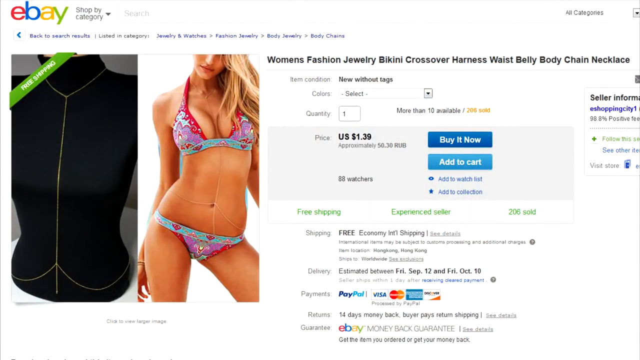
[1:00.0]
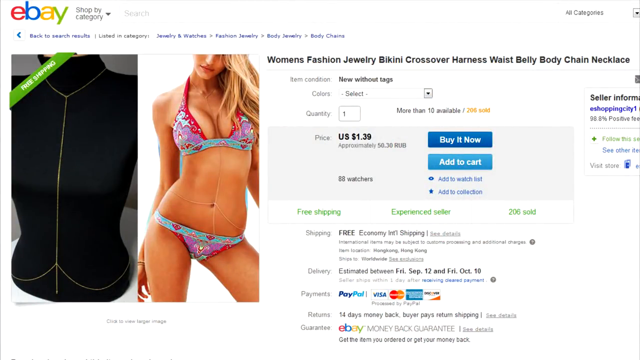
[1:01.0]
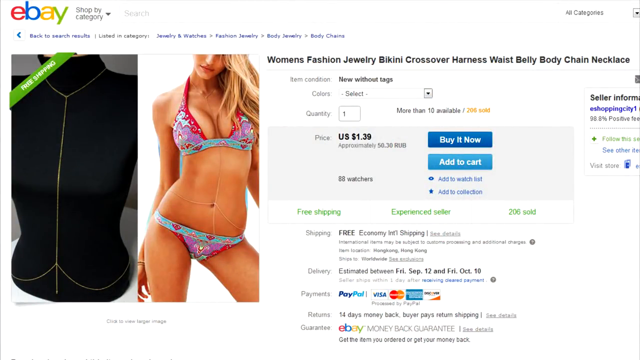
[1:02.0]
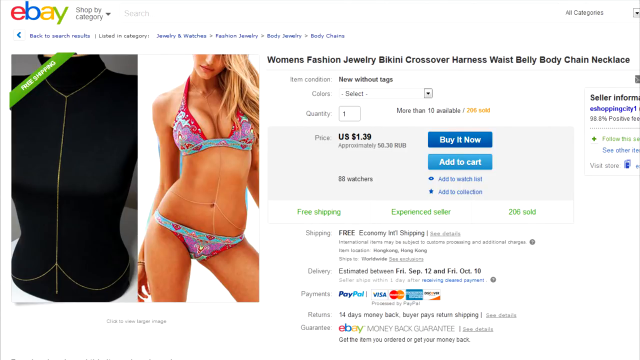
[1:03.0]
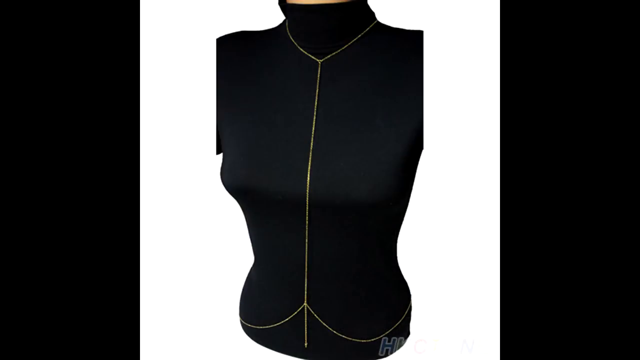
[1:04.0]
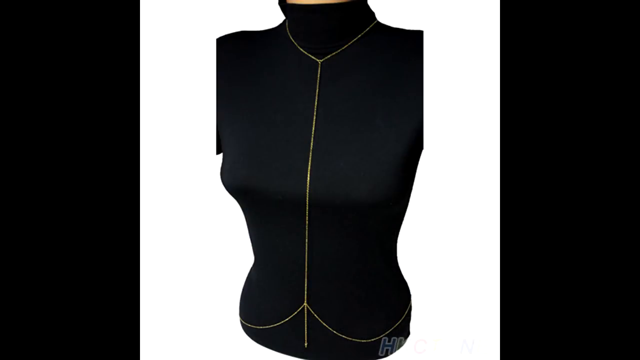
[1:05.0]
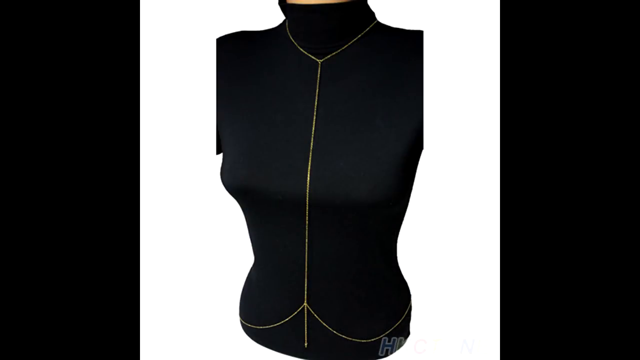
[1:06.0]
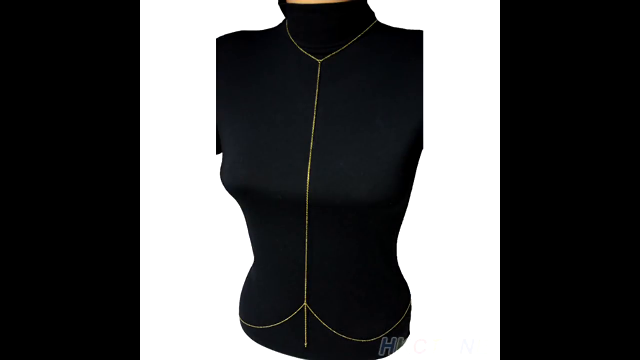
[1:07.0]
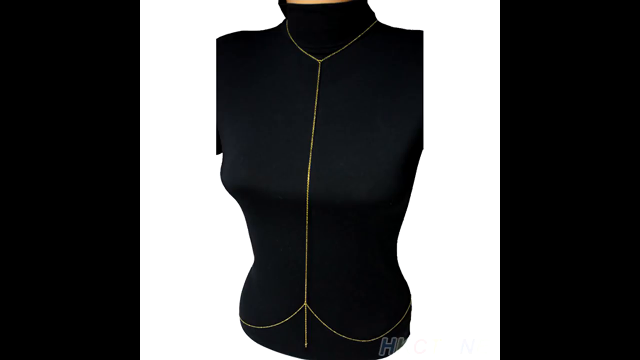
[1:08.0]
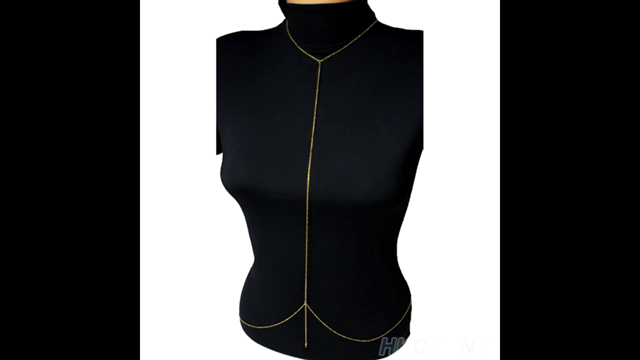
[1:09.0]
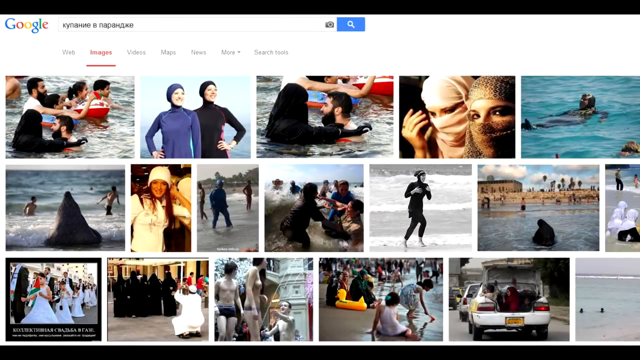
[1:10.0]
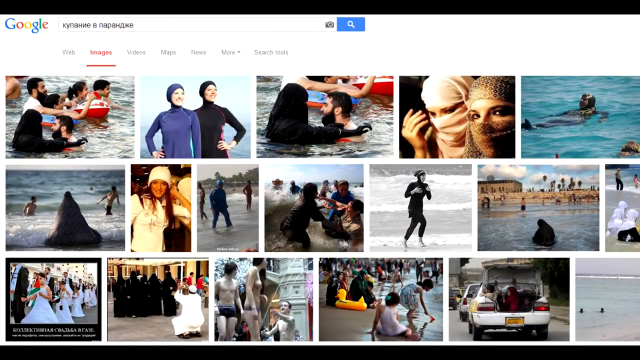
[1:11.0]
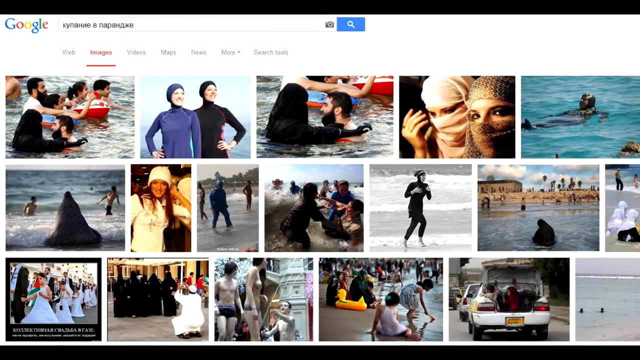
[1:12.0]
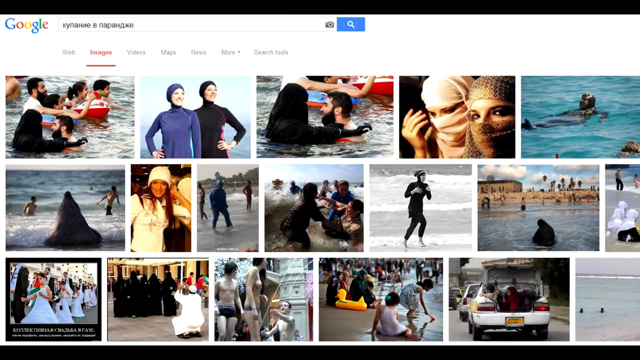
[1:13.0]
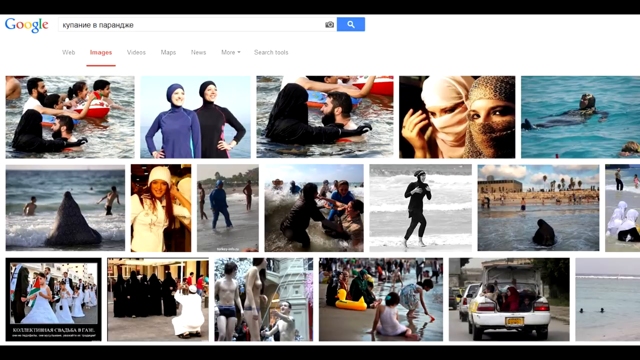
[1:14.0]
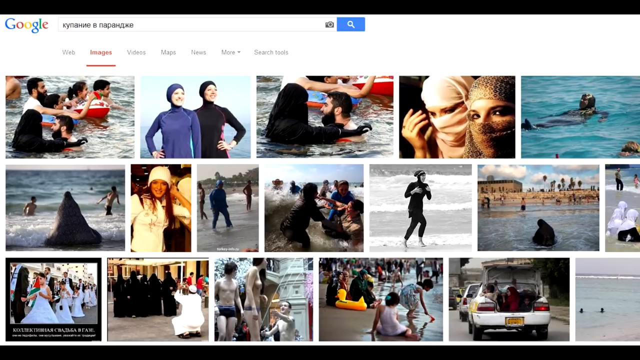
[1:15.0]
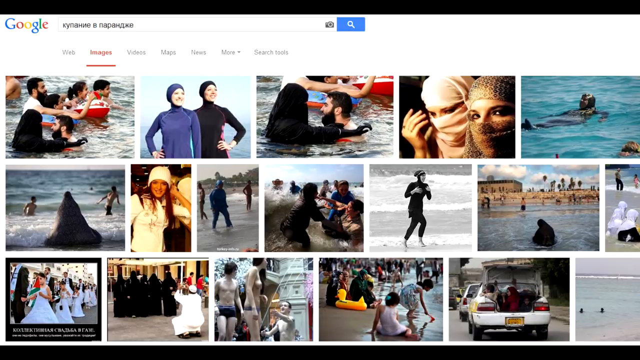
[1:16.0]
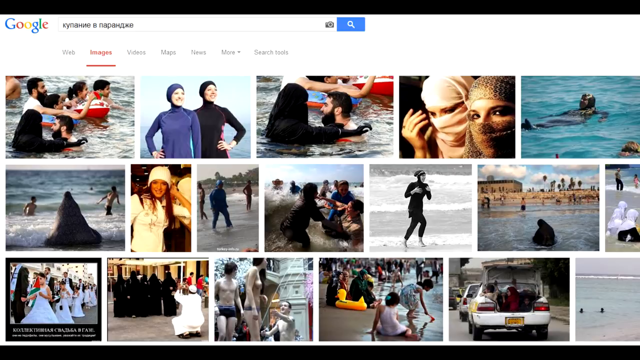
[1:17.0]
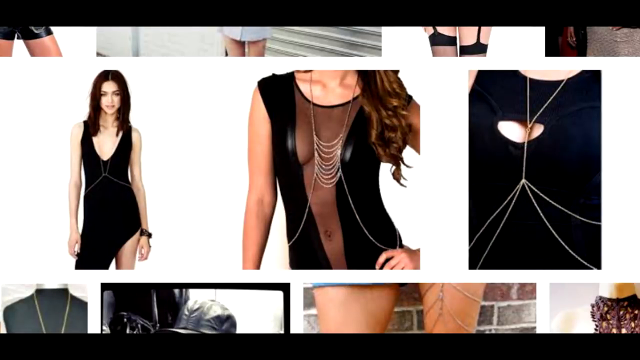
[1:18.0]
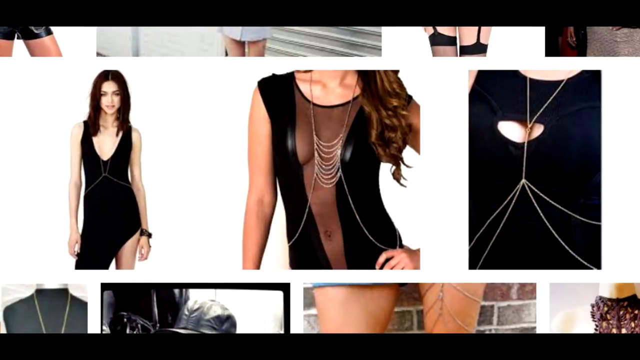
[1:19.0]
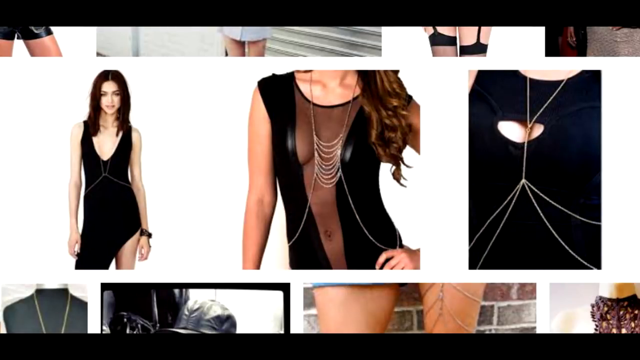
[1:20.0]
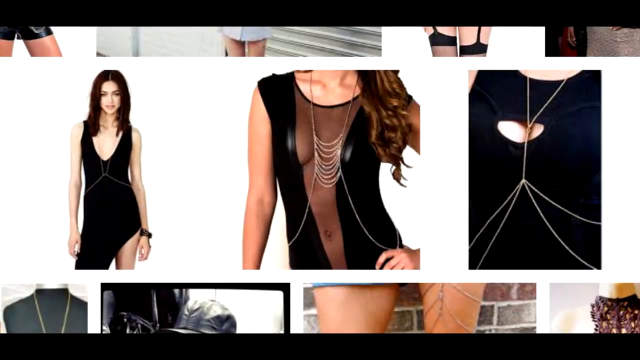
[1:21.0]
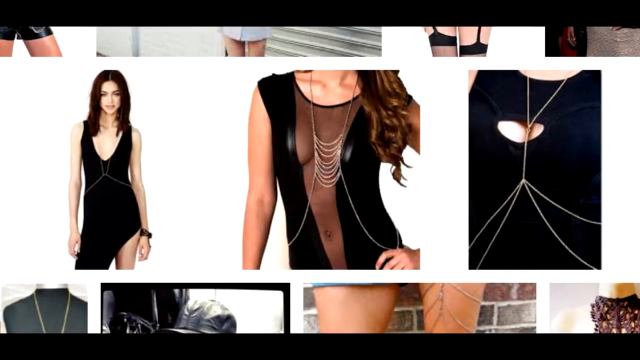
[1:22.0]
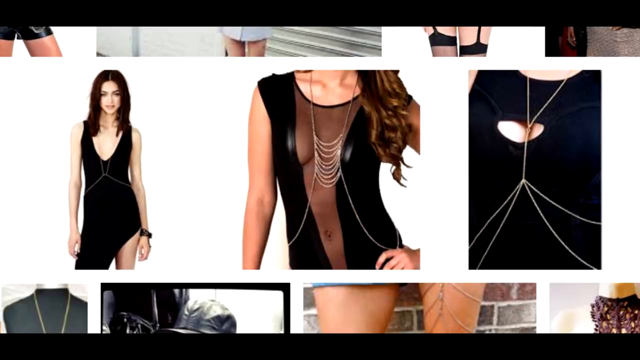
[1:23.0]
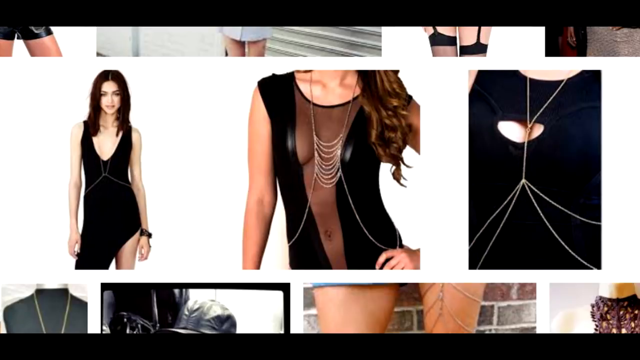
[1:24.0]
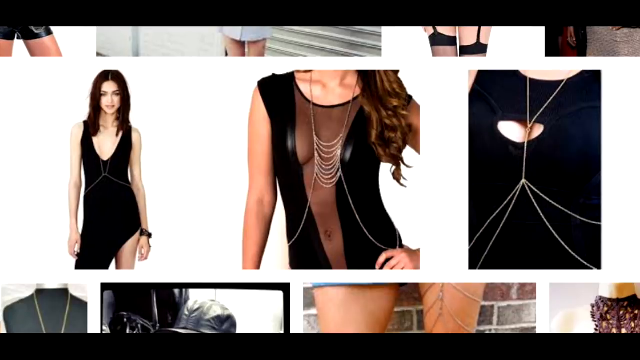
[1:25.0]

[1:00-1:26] A recording of a computer screen shows the listing for a women's fashion jewelry bikini crossover harness waist belly body chain necklace. The item is listed in excellent condition with selectable colors, more than 10 available and 206 sold from the listing. The price is $1.39, with options to buy it now or add it to cart. There are 88 watchers on the product, and it has free economy international shipping from an experienced seller. The product photos show a chain necklace that wraps around the neck and ends in a single chain running between the chest and stomach, finishing in a hoop that wraps around the waist. It is shown on a black mannequin and photoshopped onto a model wearing a red, purple, and blue bikini. The video cuts to the mannequin wearing the necklace, then to a Google image search results page for a phrase in Cyrillic, showing various women wearing burkas as well as other traditional swimsuits.